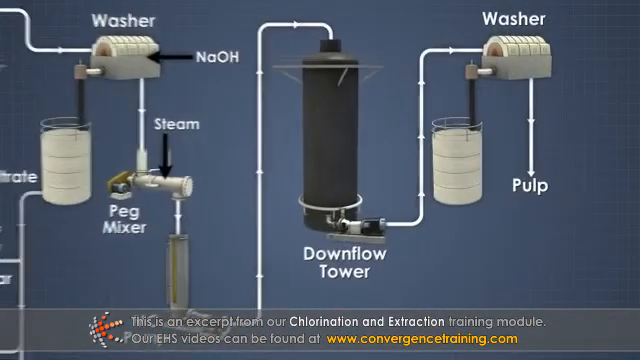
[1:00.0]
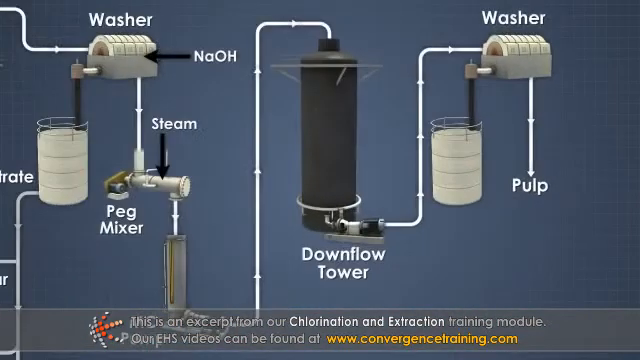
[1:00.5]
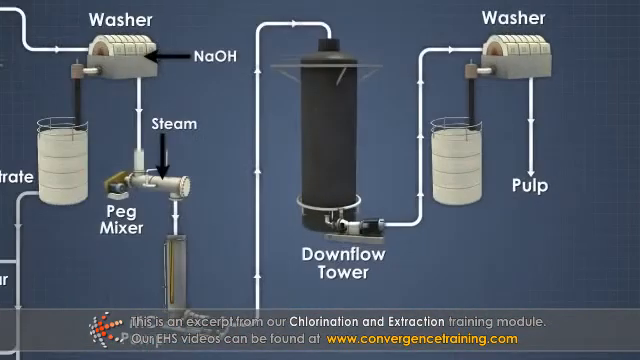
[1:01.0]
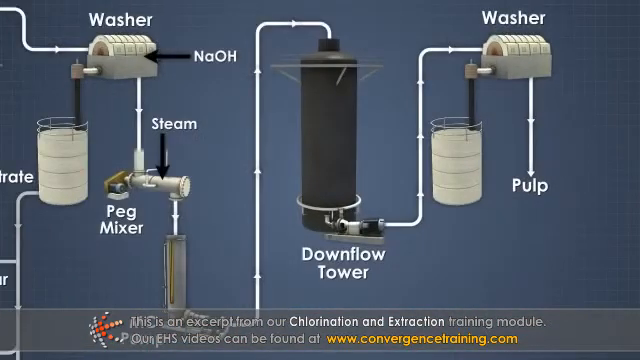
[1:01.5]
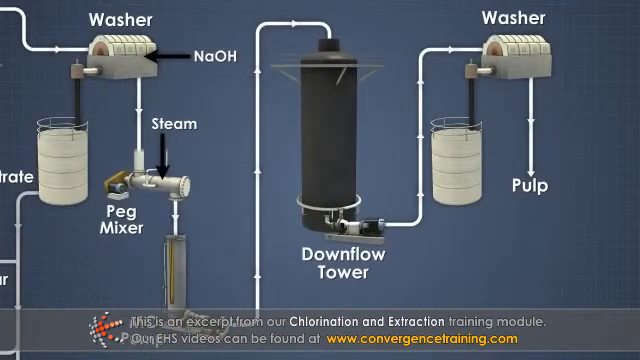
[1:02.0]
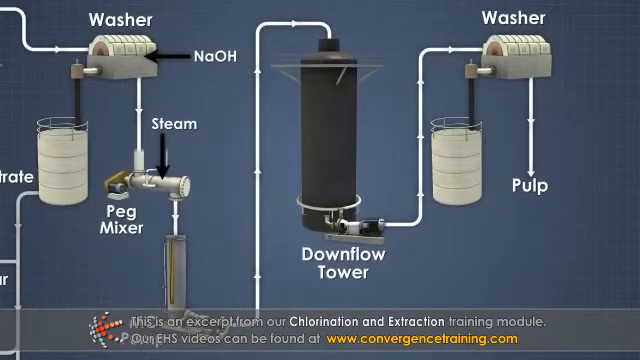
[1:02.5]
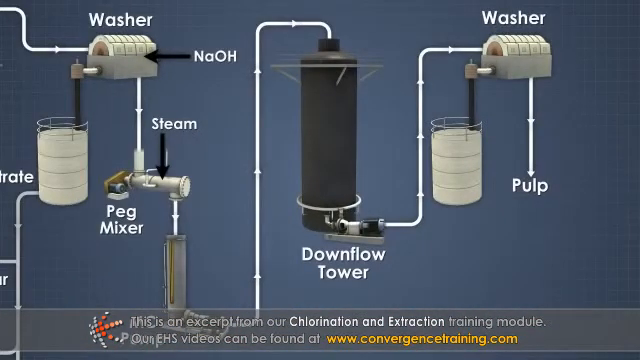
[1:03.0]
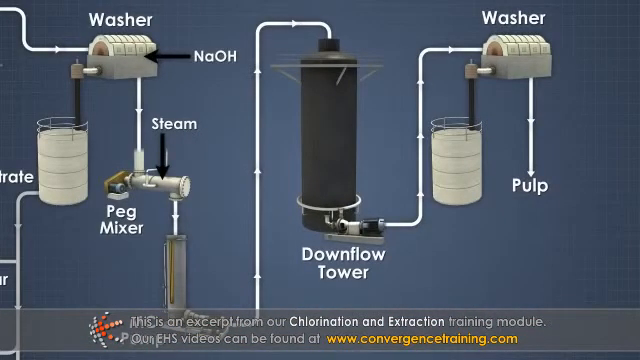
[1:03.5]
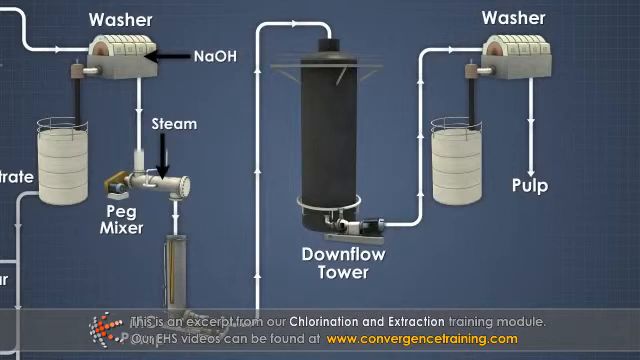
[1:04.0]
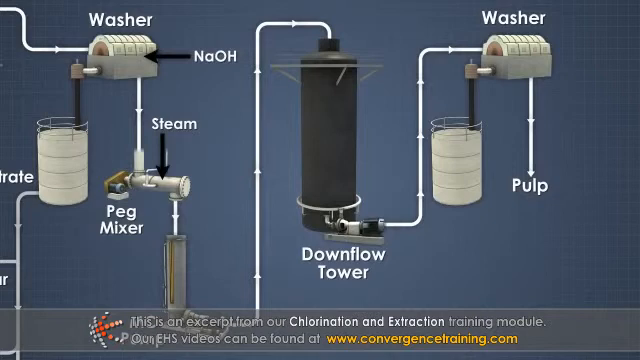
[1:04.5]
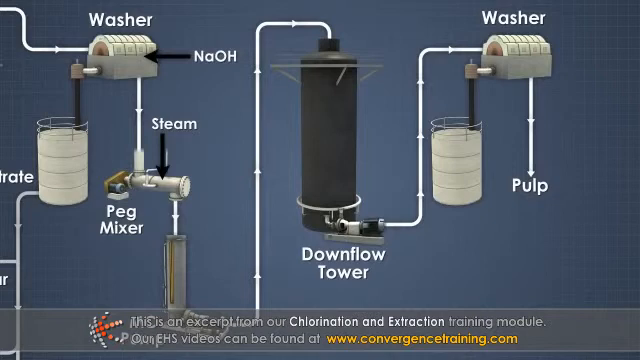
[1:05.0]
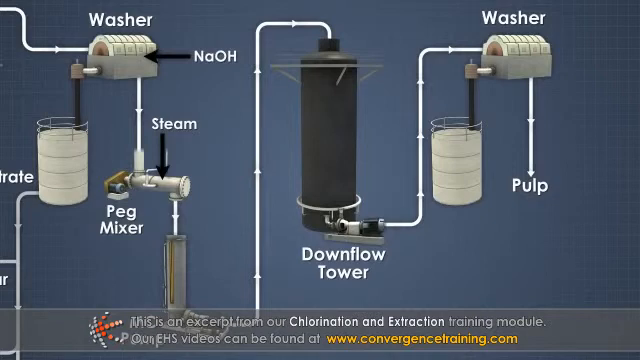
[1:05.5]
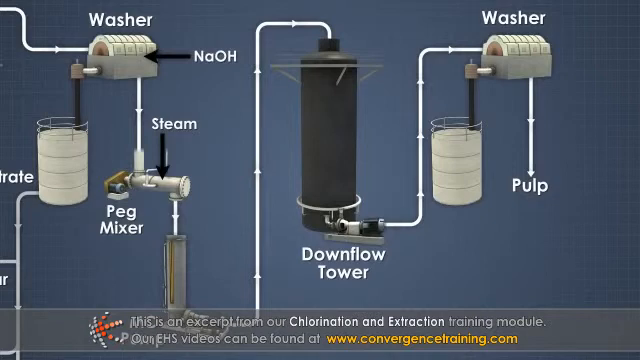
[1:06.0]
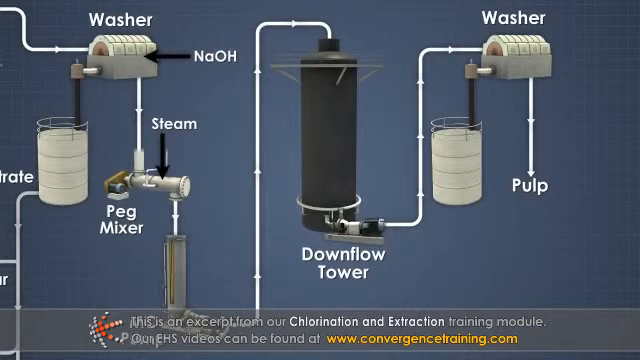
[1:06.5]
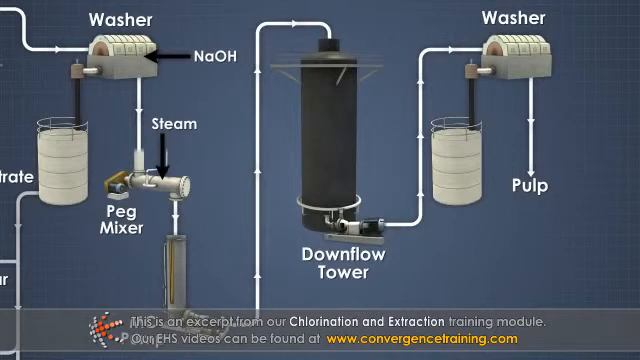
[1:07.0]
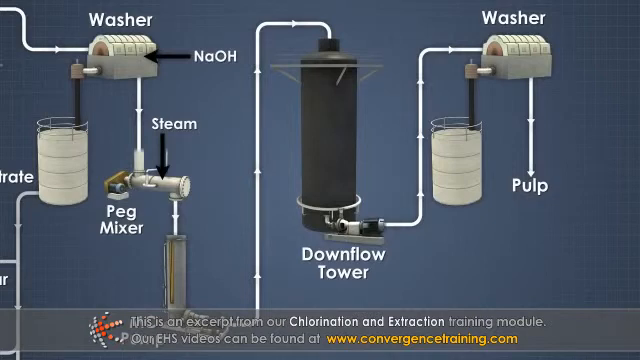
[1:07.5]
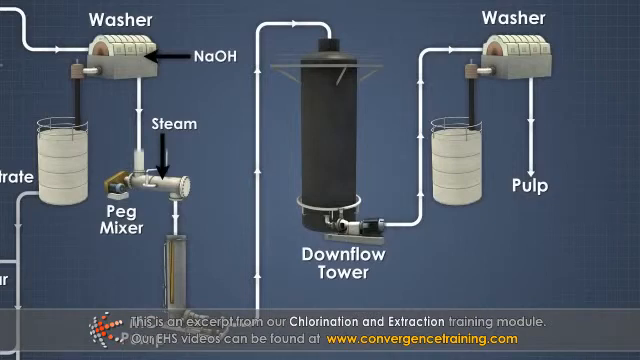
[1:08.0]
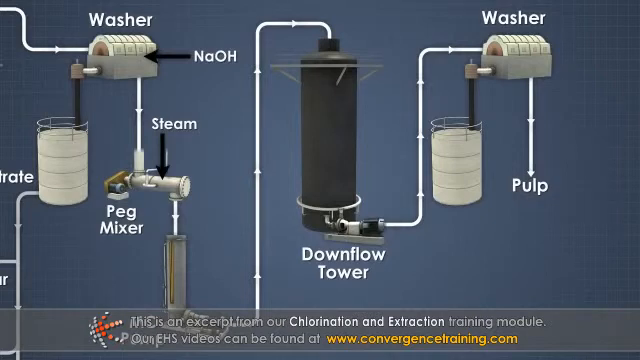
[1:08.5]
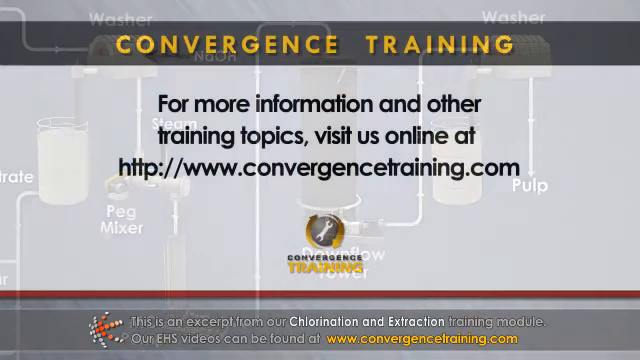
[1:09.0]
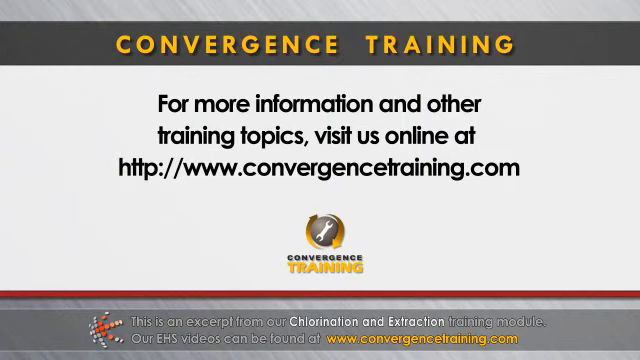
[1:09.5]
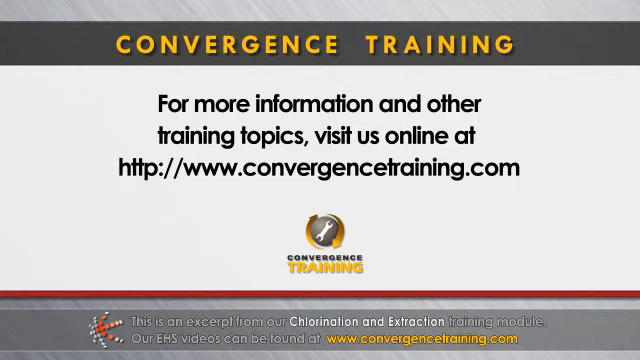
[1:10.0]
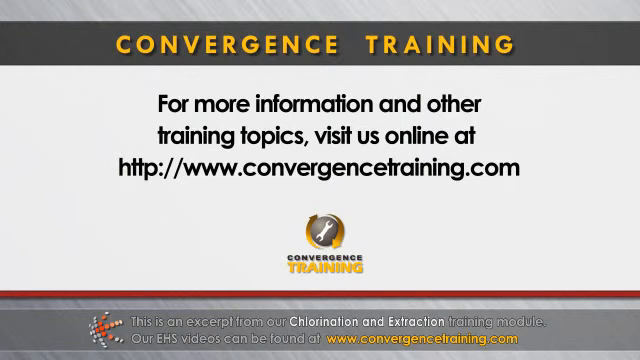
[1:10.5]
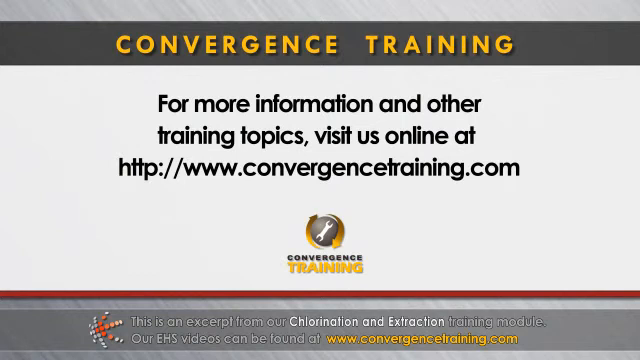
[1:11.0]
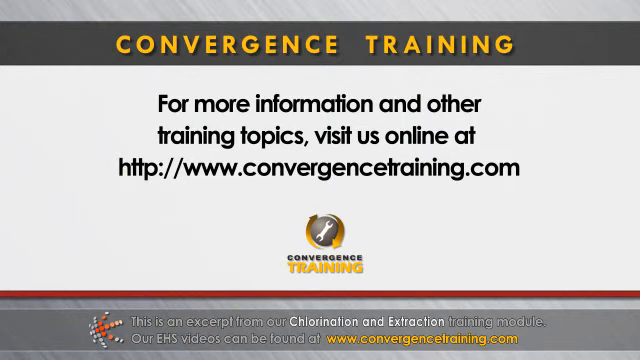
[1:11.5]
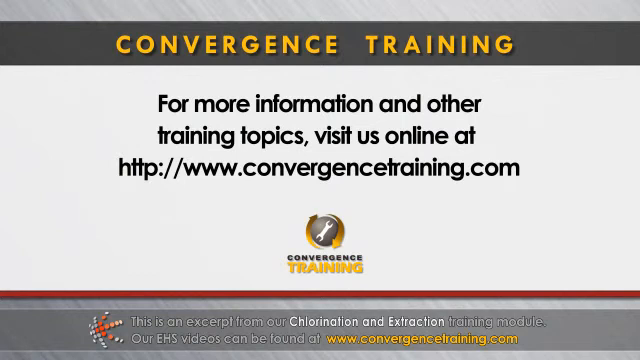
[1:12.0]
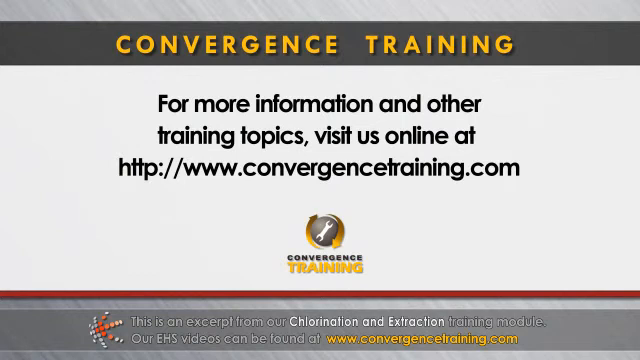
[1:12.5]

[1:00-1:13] The video focuses on the final side of the schematic, with elements such as a washer, a peg mixer, a downflow tower and another washer, and the pulp comes out at the end. It then transitions to a final slide with "convergence training" in bold caps in yellow at the top, against a grey industrial background rectangle. The white main section features black text reading "For more information and other training topics visit us online at http://www.convergencetraining.com". The Convergence Training logo is then shown, with a grey and white wrench and a couple of yellow lines suggesting the rotational movement of a sphere, and "convergence training" below it: "convergence" in small black all caps and "training" in large yellow all caps. Below, the caption still reads "This is an excerpt from our chlorination and extraction training module. Our EHS videos can be found www.convergencetraining.com", with the hyperlink in yellow.